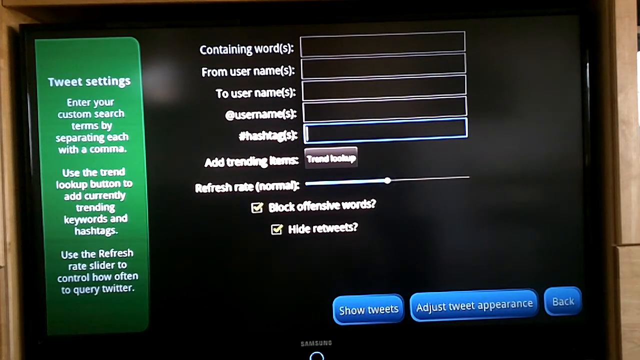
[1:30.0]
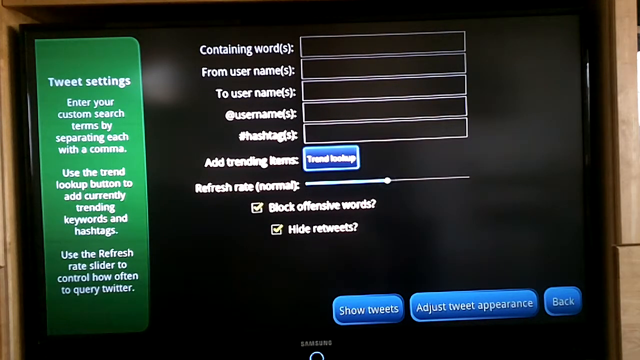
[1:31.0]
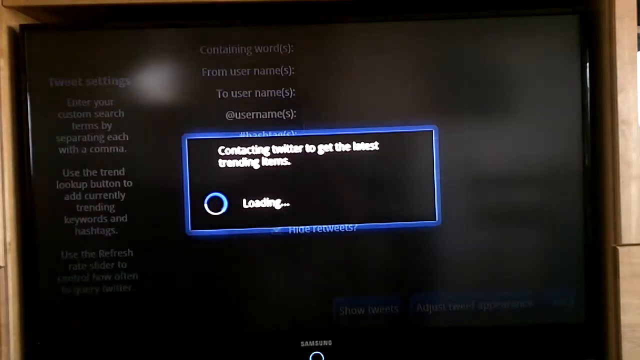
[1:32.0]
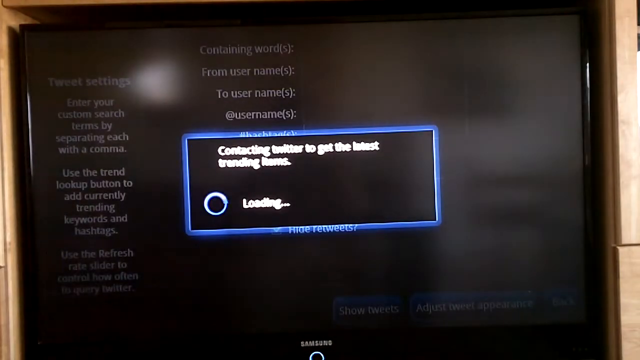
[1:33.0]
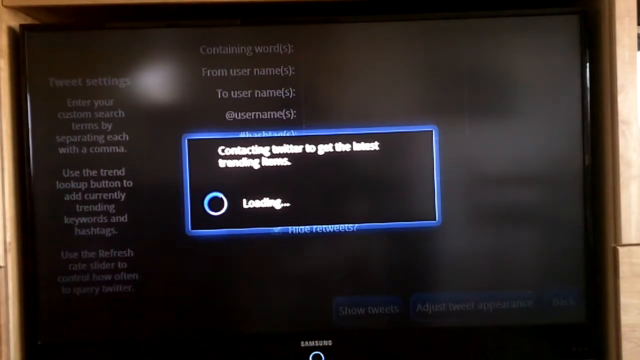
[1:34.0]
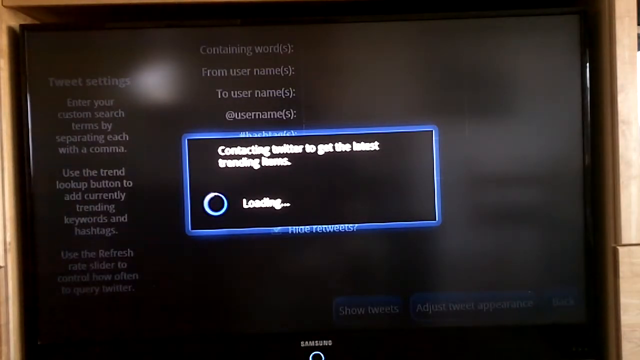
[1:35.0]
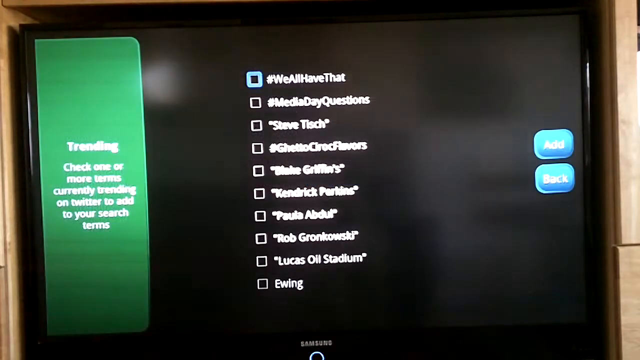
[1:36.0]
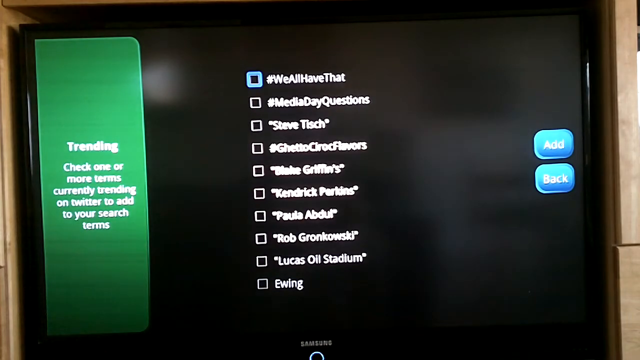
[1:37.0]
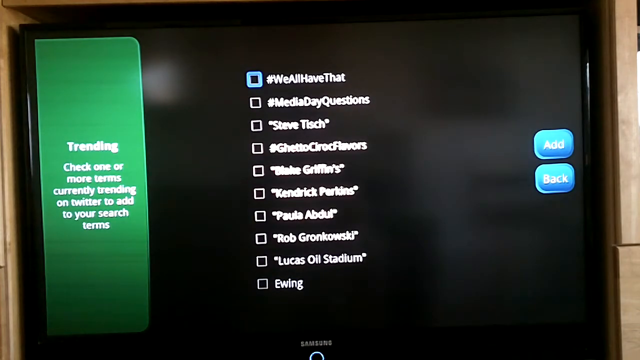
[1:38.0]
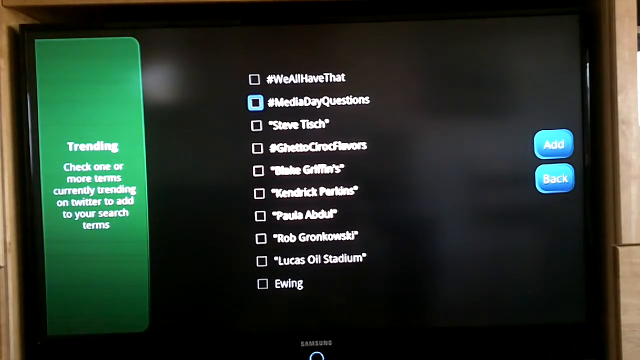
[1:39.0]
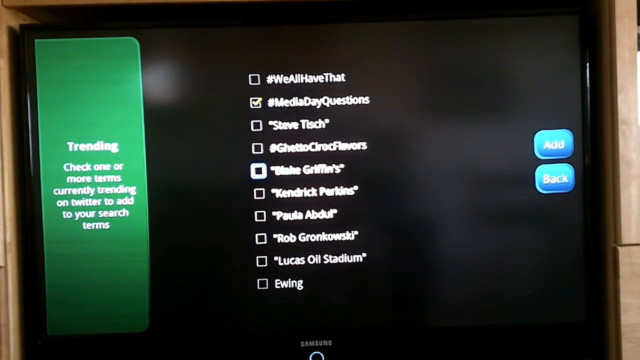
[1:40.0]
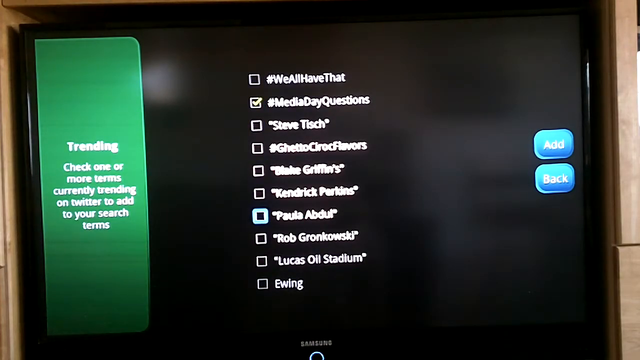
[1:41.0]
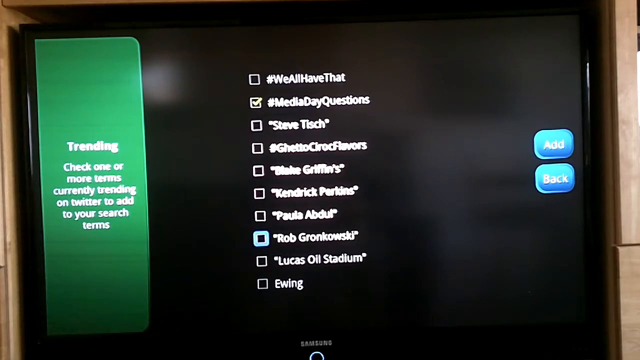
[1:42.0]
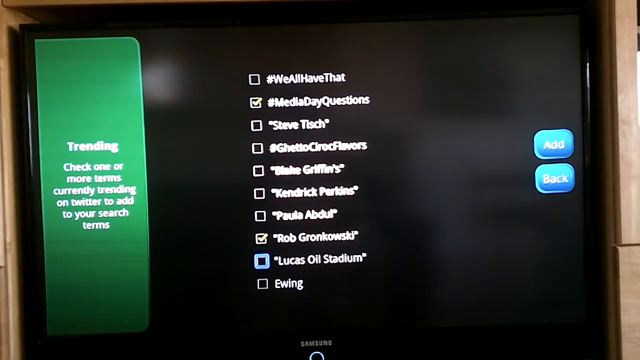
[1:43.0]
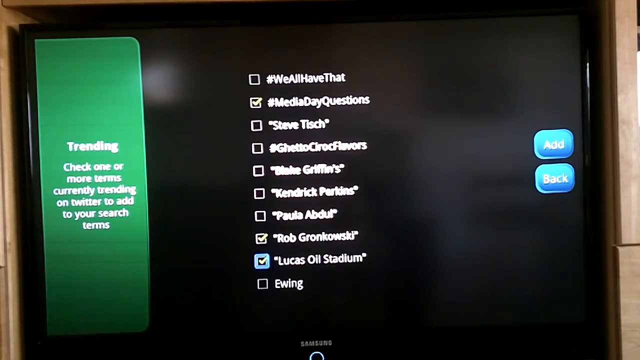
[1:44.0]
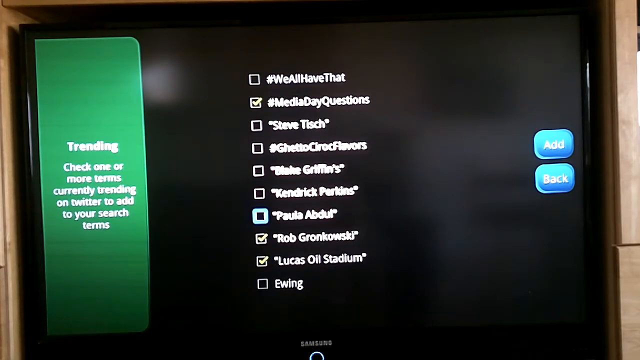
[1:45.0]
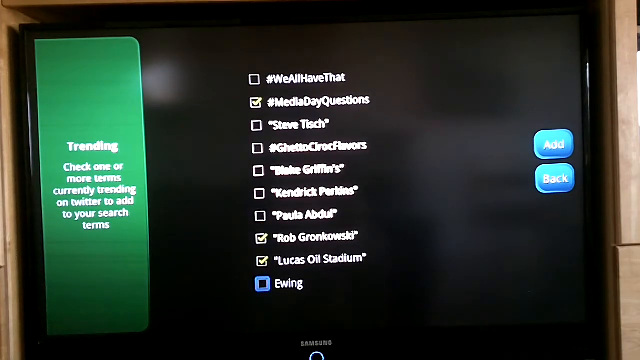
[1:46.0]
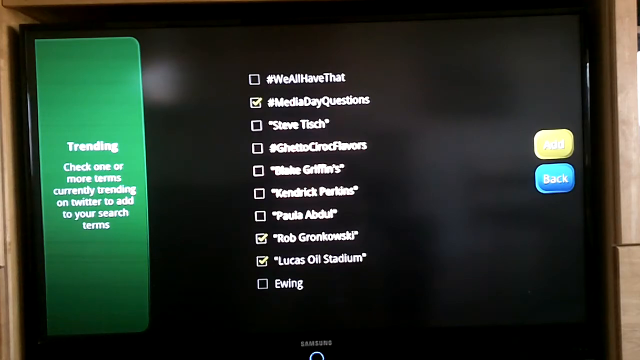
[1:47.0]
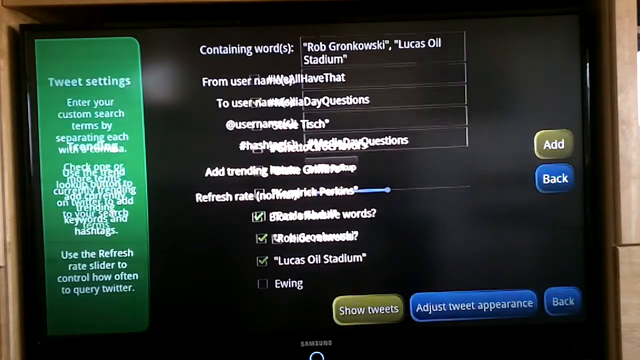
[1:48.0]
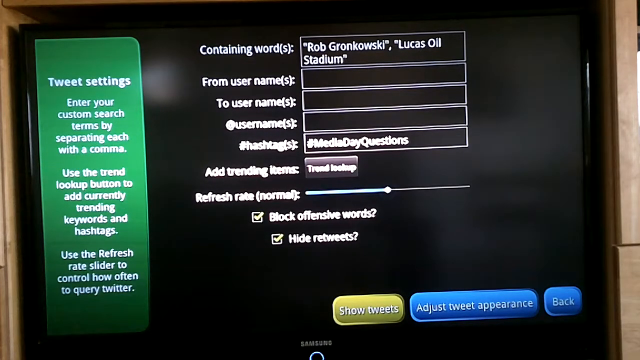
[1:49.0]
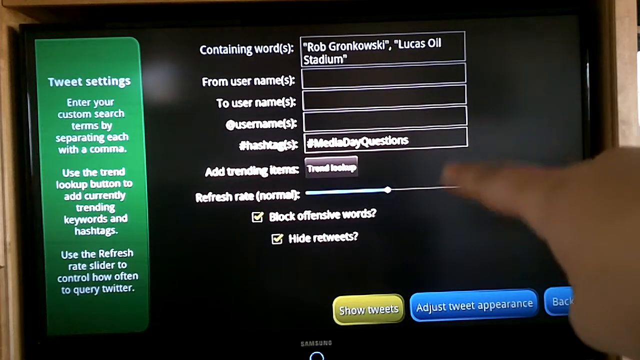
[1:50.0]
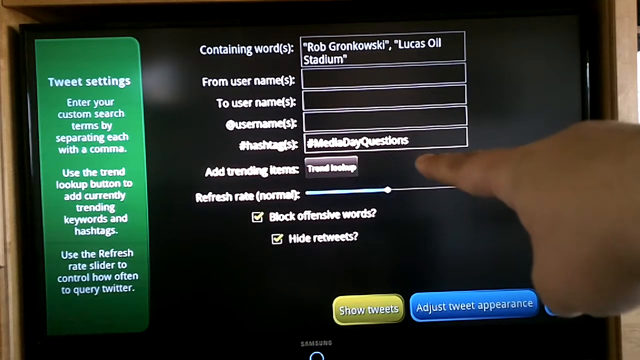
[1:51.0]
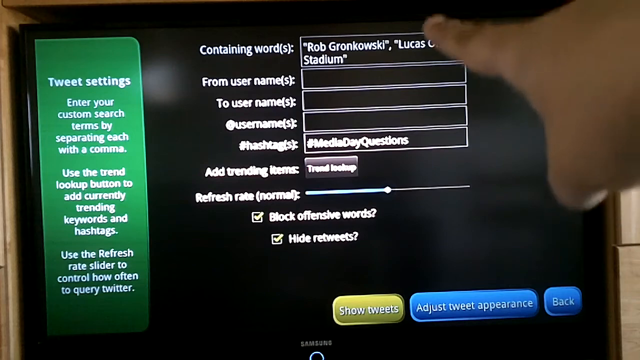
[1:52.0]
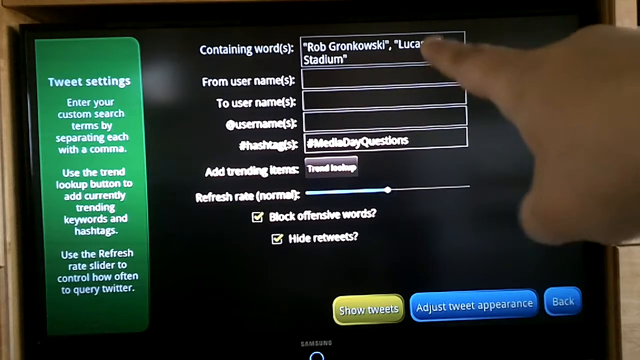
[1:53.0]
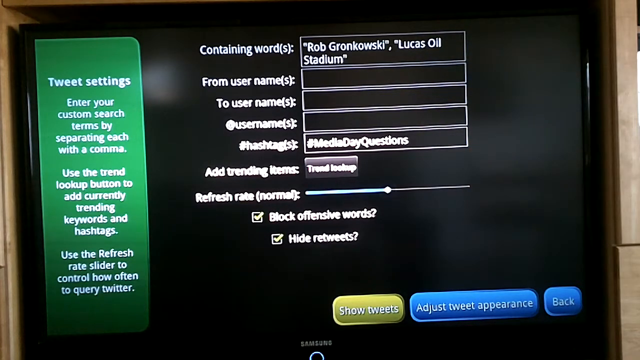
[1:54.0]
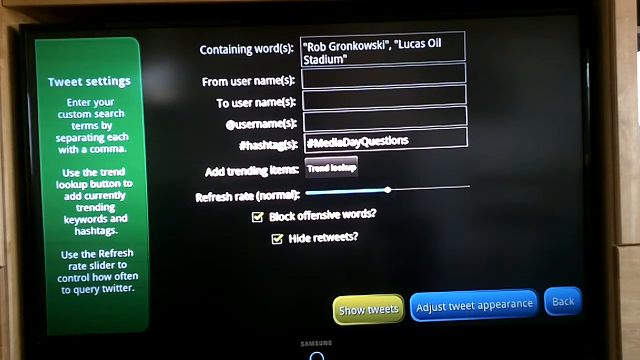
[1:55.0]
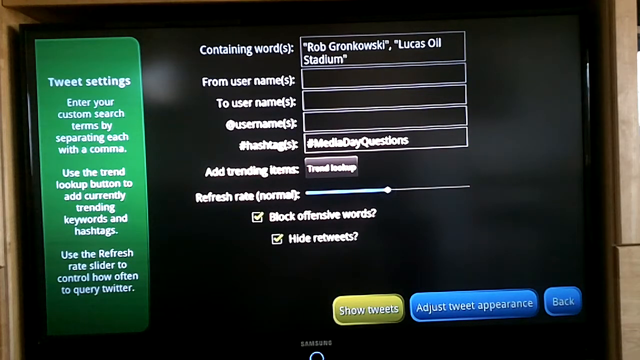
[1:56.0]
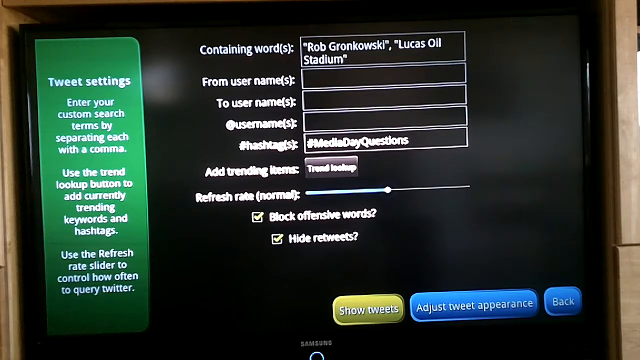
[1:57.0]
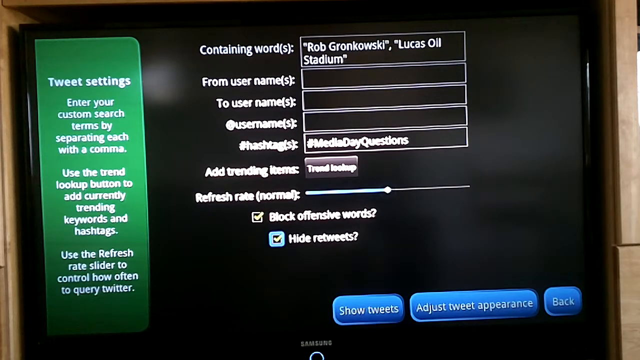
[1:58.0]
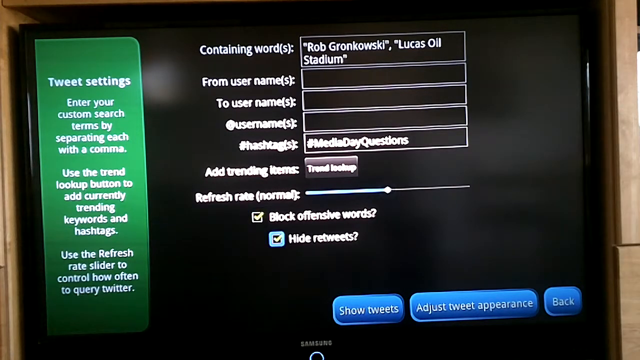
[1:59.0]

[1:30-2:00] The video appears to be filming a TV screen. A green banner runs vertically down the left side of the screen from top to bottom. Inside it, white text reads "tweet settings. Enter your custom search terms by separating each with a comma. Use the trend lookup button to add currently trending keywords and hashtags. Use the refresh rate slider to control how often to query Twitter." To the right, on a black background, white words and phrases have boxes next to them. From top to bottom they read "containing words from usernames to usernames at usernames", "hashtags", "add trending items" and "trend lookup". The refresh rate slider is set to about the middle and says "normal". "Block offensive words" is checked yes, and "hide retweets" is also checked yes. In the bottom right corner of the TV screen are three blue buttons: from left to right they say "show tweets", "adjust tweet appearance" and "back".